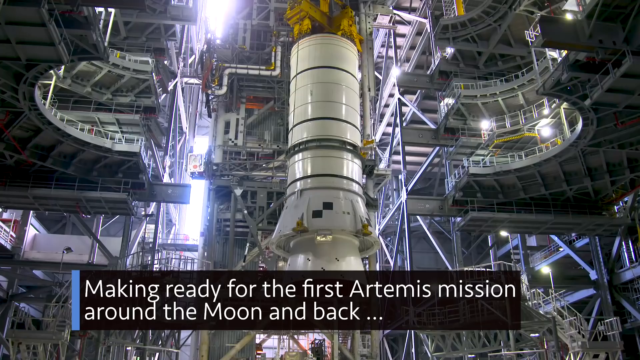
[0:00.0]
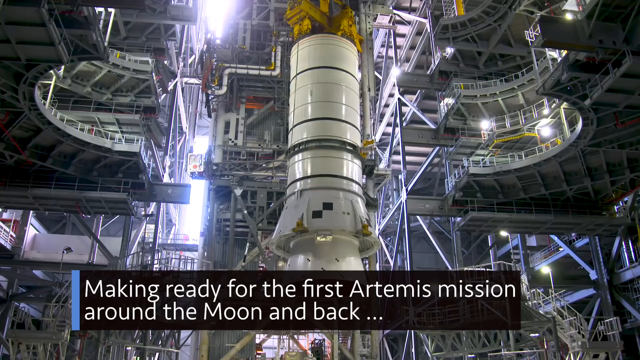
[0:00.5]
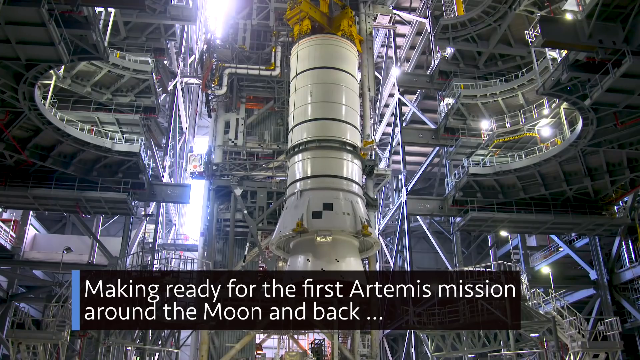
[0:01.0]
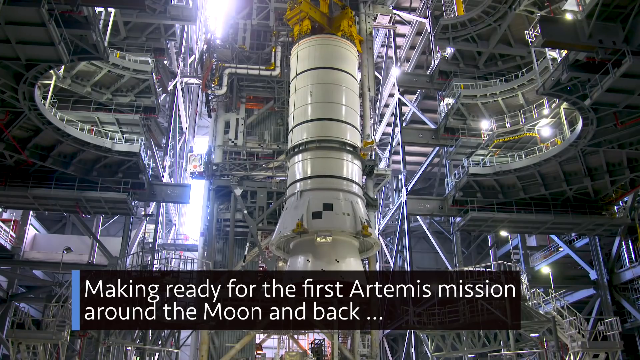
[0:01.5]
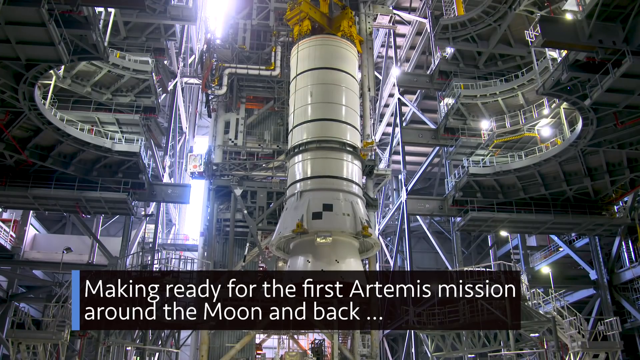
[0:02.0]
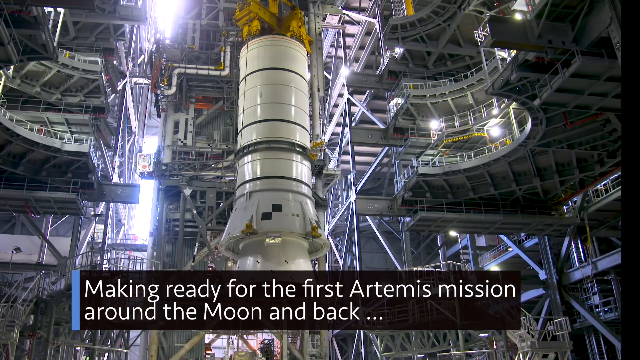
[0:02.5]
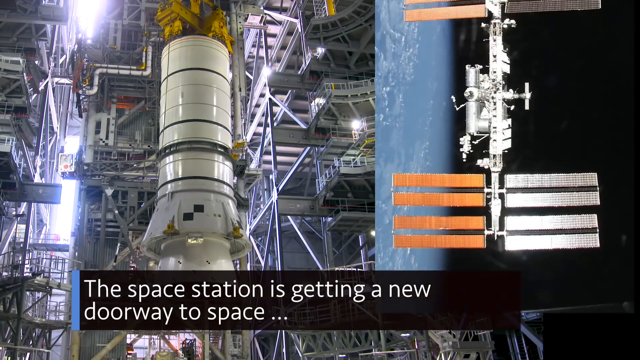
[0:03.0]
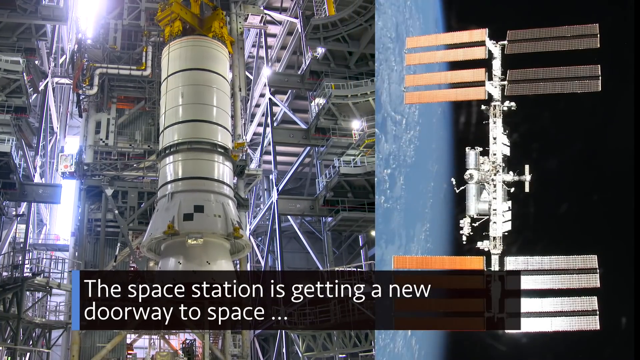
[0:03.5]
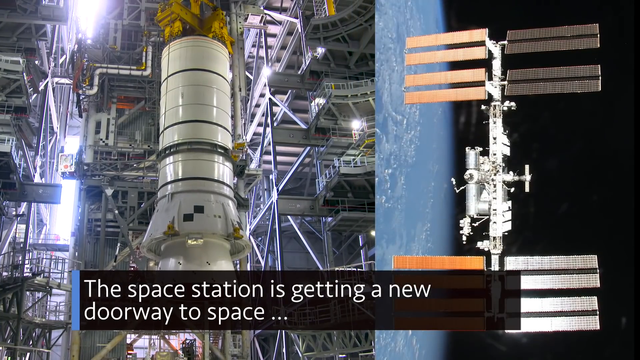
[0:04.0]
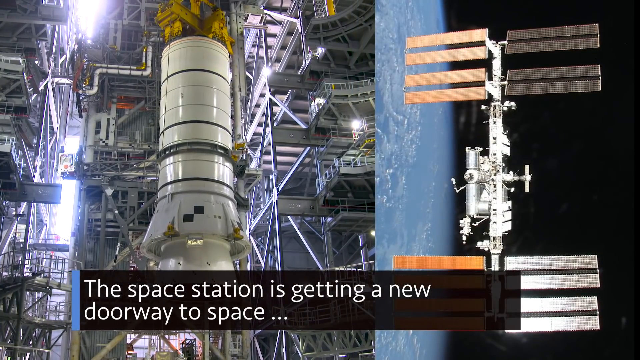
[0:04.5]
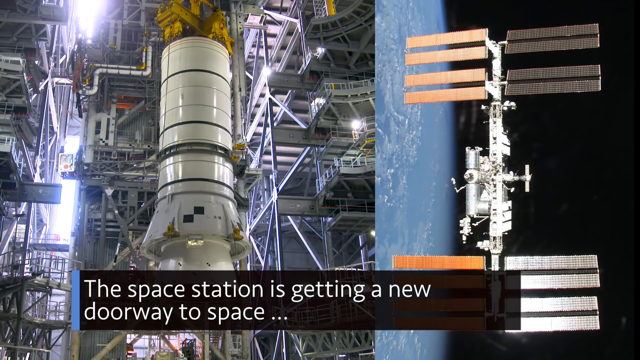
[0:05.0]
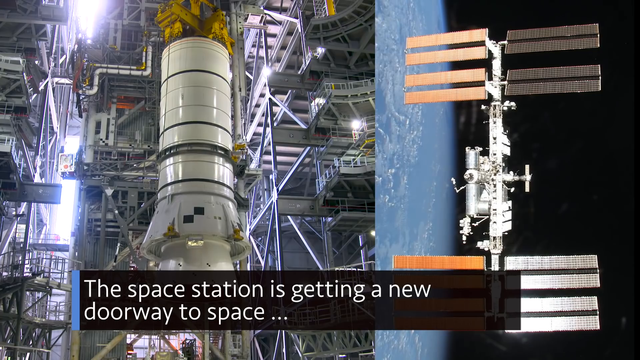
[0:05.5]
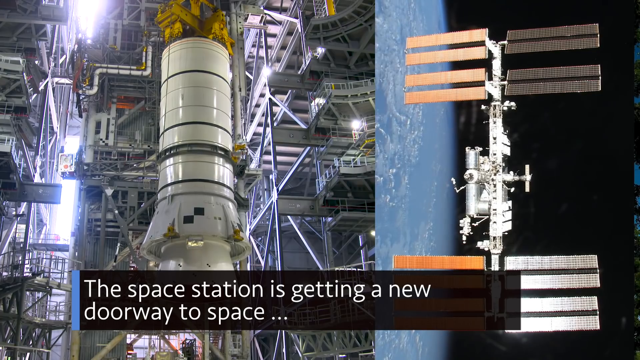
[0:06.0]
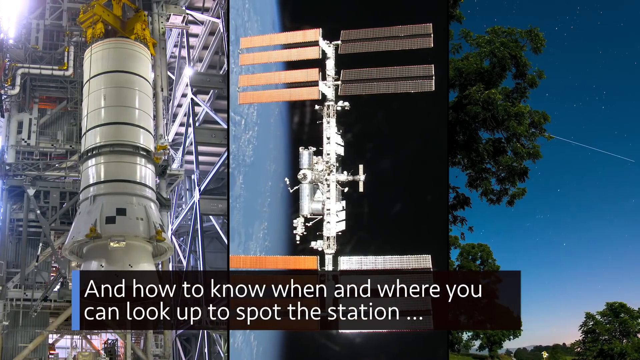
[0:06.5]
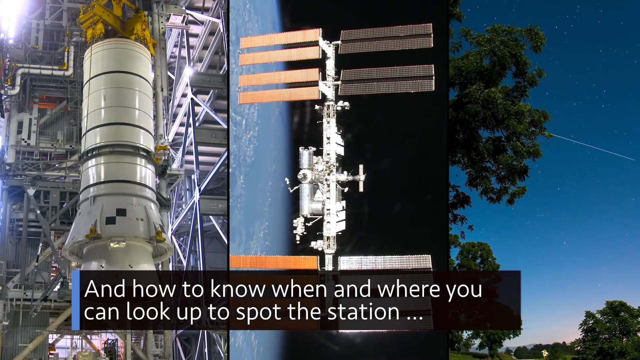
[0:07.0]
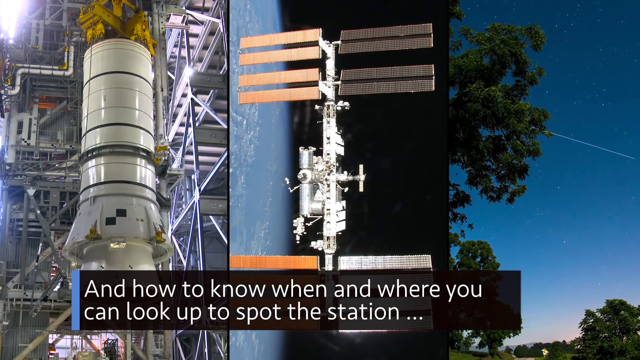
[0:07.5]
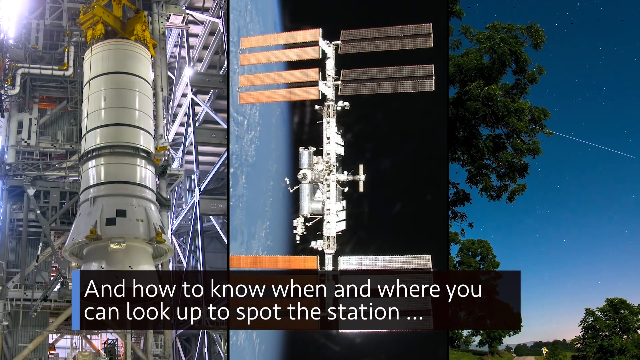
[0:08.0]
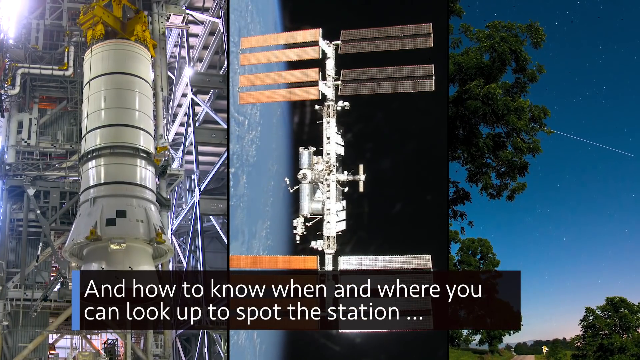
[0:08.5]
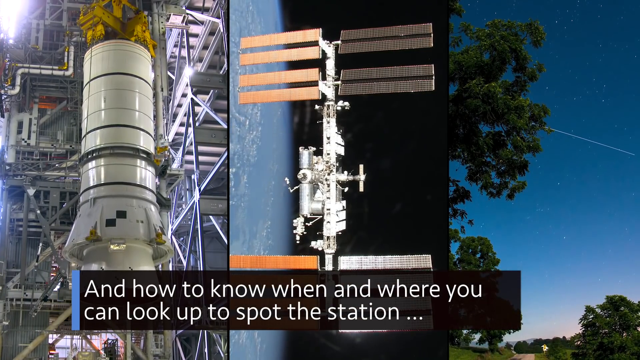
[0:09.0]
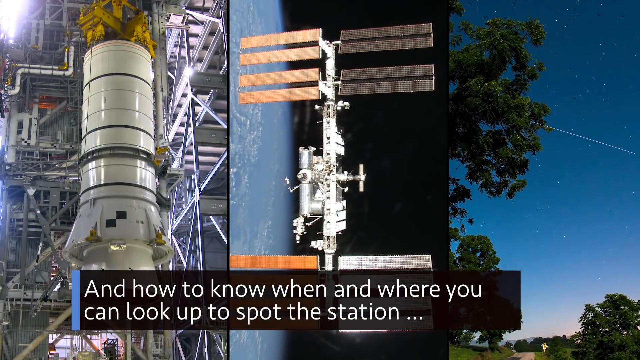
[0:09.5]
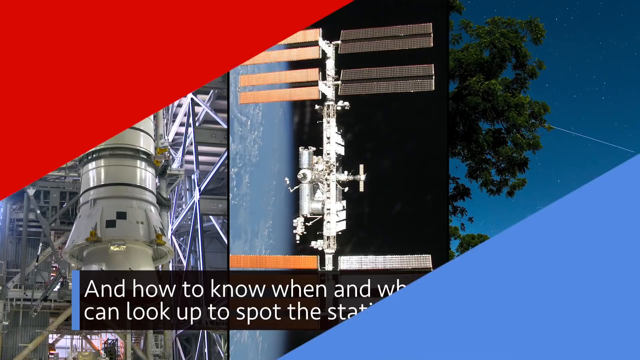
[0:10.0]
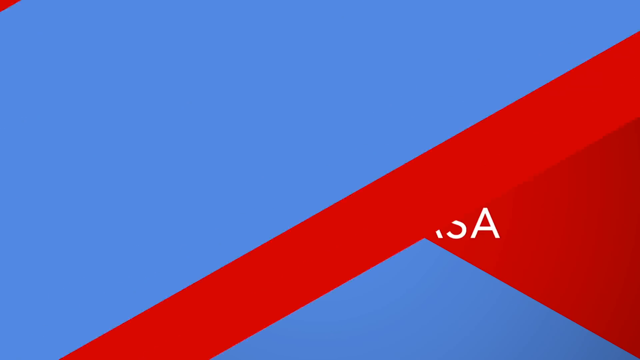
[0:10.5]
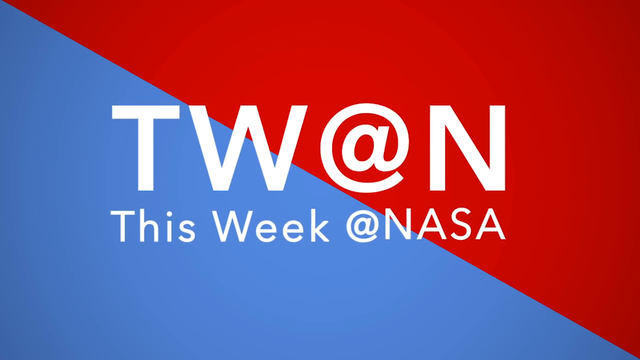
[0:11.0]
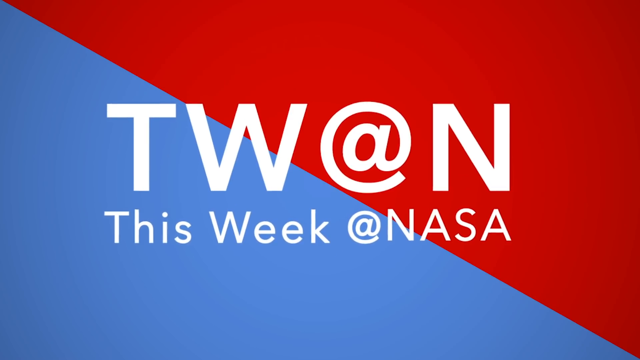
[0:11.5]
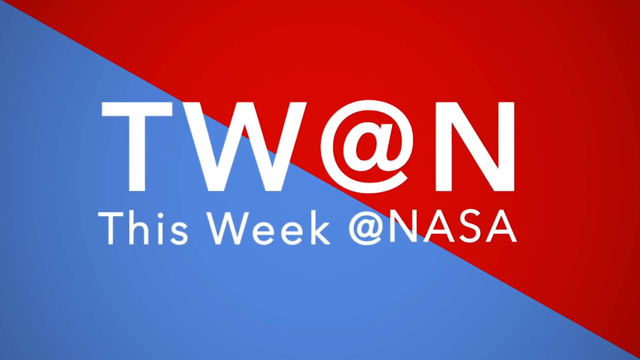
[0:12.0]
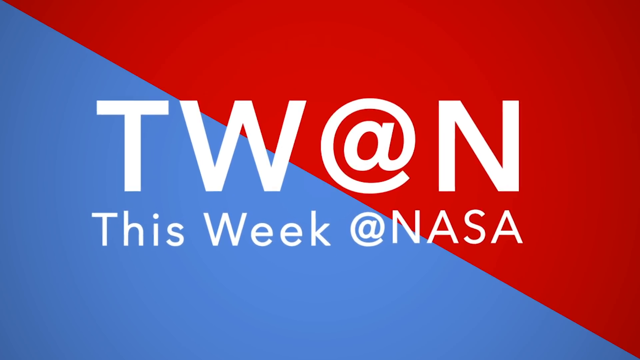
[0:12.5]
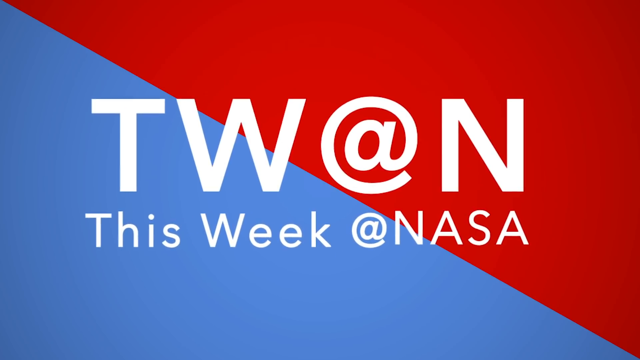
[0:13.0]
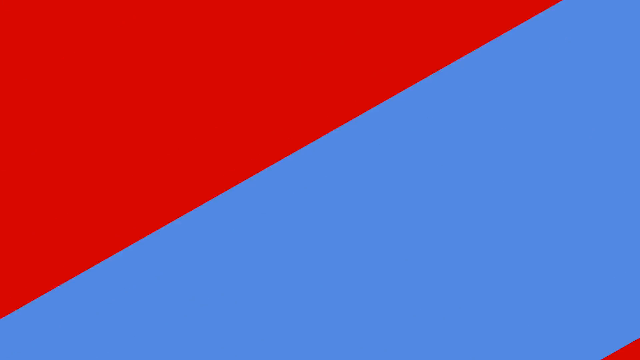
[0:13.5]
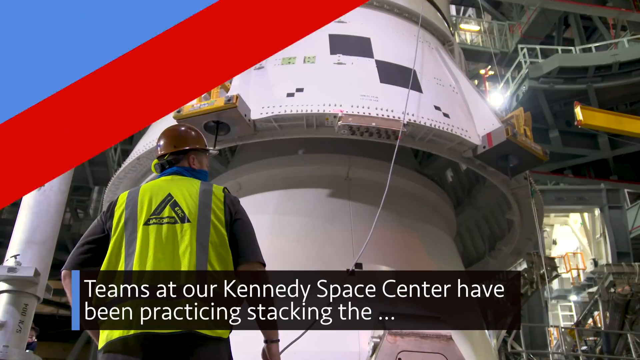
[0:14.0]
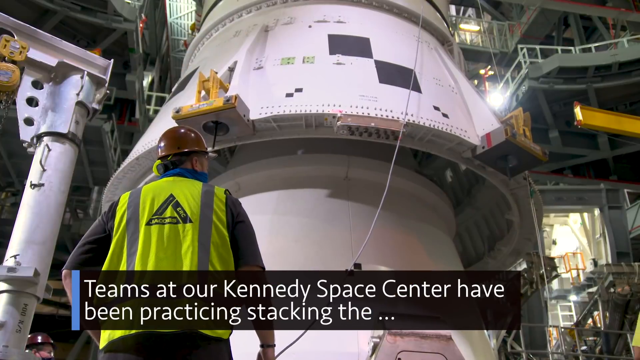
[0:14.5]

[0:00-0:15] The video opens with on-screen text reading "making ready for the first Artemis mission" from NASA. A white rocket, apparently the Artemis rocket, is standing up, and it seems to still be under construction. Text reads "making ready for the first Artemis mission around the moon and back," followed by "the space station is getting a new doorway to space" with a picture of the space station up there, and then text about how to know when to look up to spot the station. A title reading TWAN, "this week at NASA," appears, followed by text beginning "Teams at our Kennedy Space Center have."